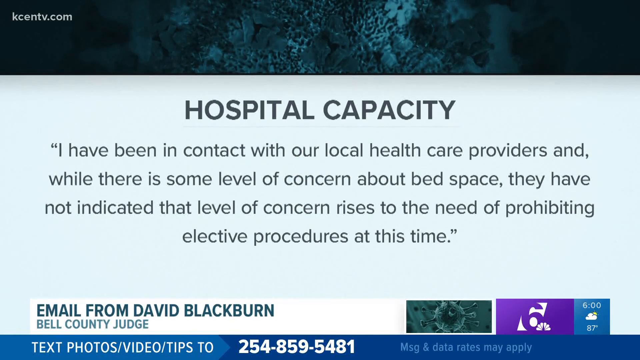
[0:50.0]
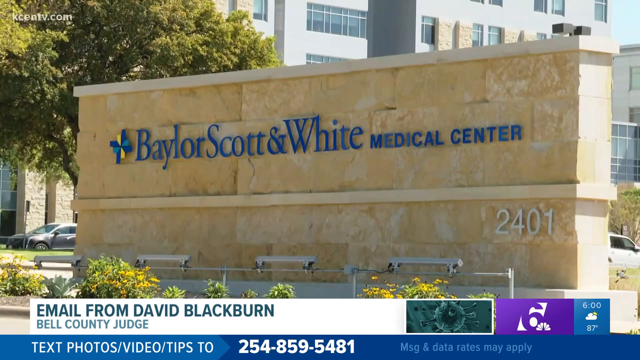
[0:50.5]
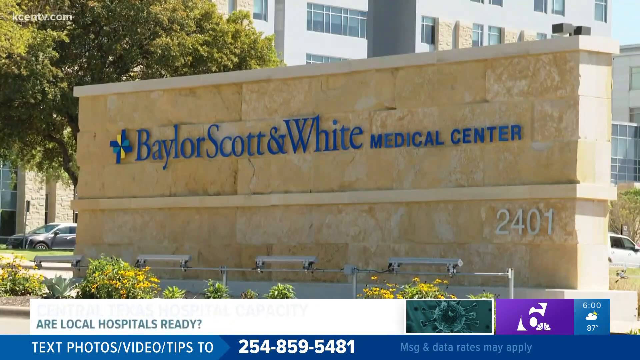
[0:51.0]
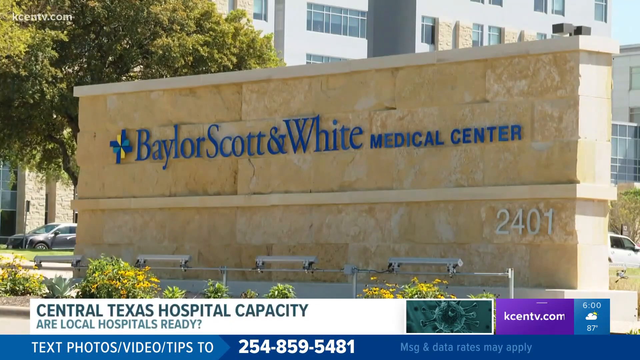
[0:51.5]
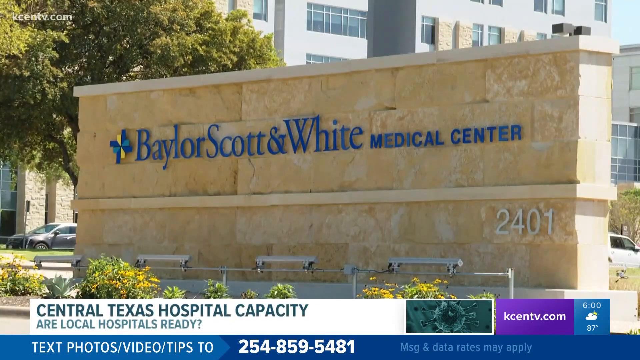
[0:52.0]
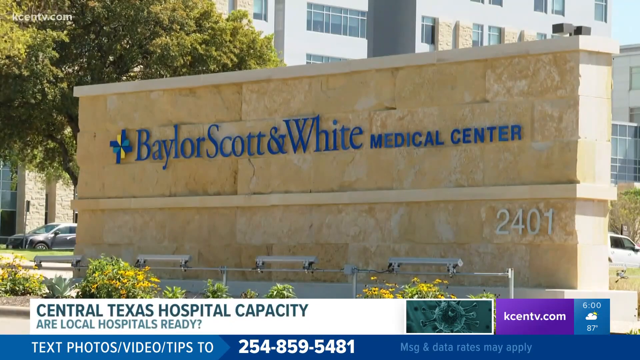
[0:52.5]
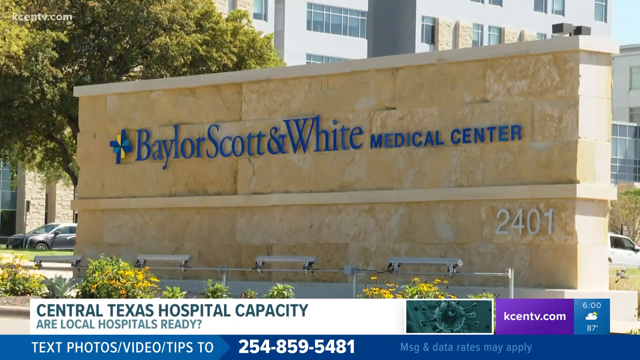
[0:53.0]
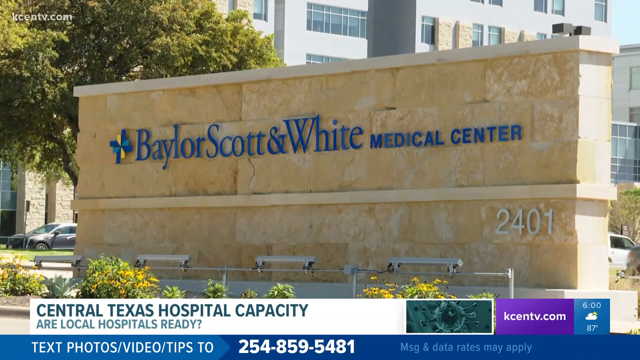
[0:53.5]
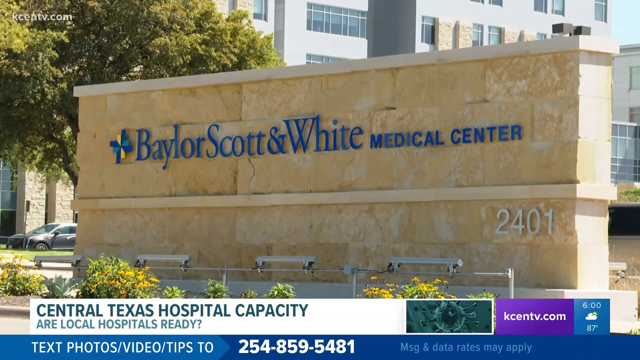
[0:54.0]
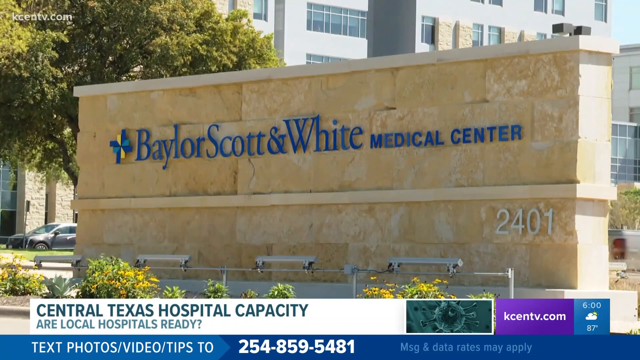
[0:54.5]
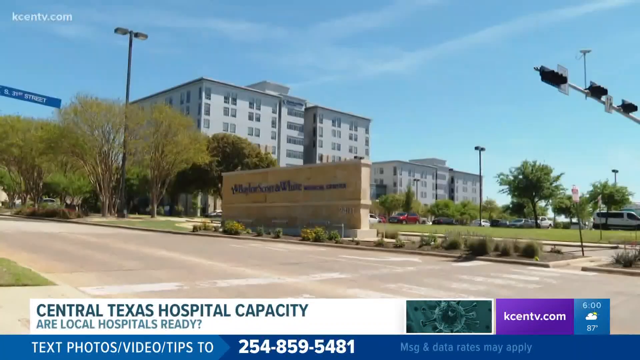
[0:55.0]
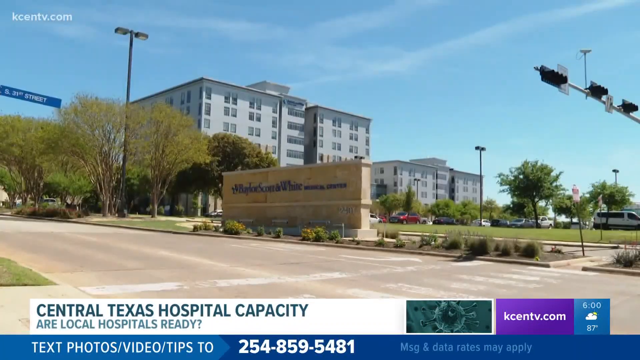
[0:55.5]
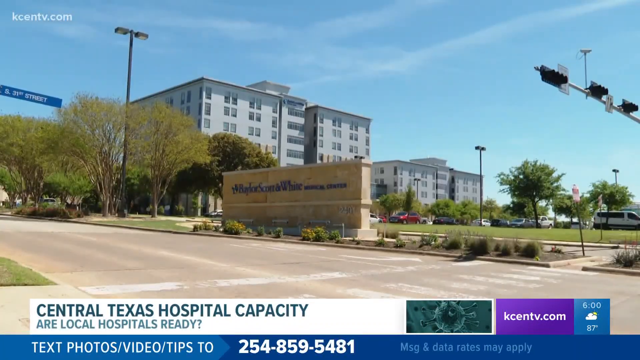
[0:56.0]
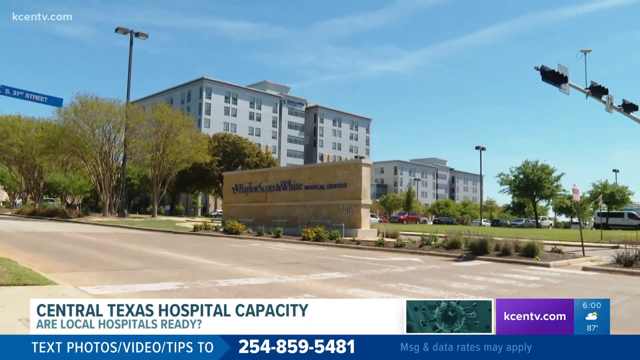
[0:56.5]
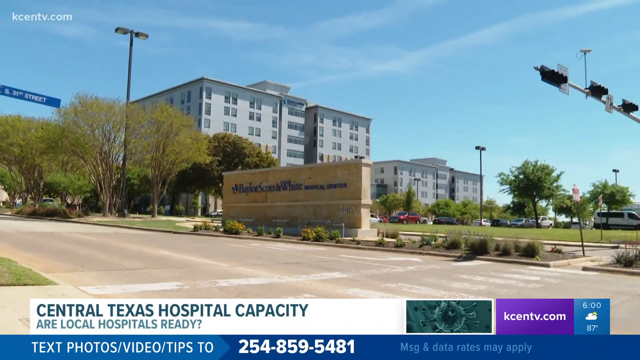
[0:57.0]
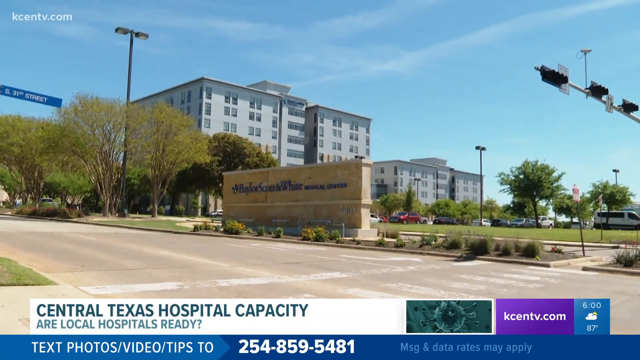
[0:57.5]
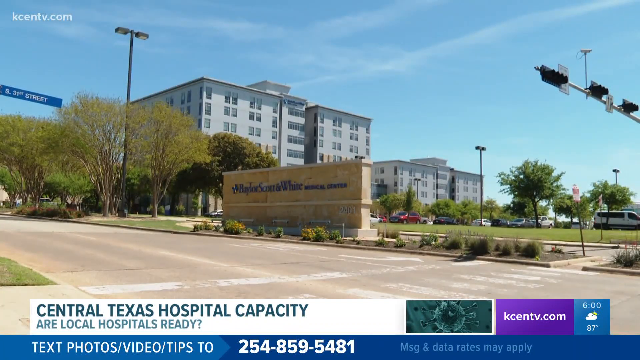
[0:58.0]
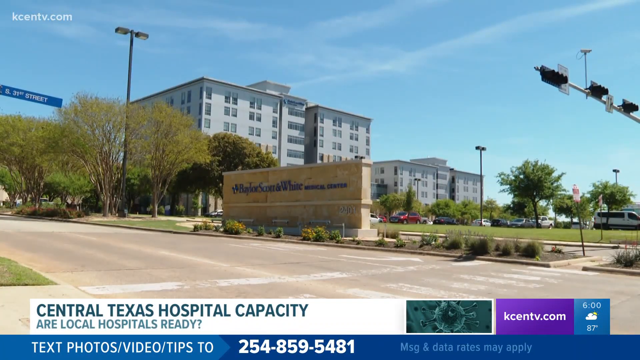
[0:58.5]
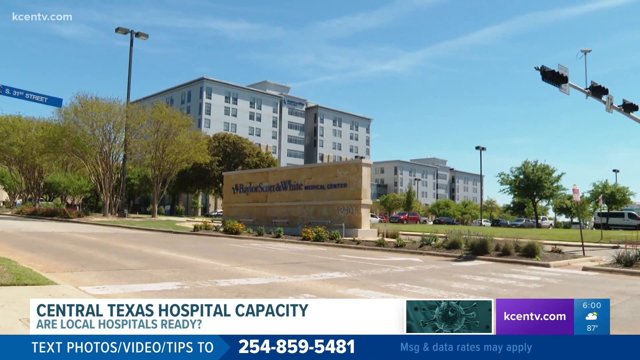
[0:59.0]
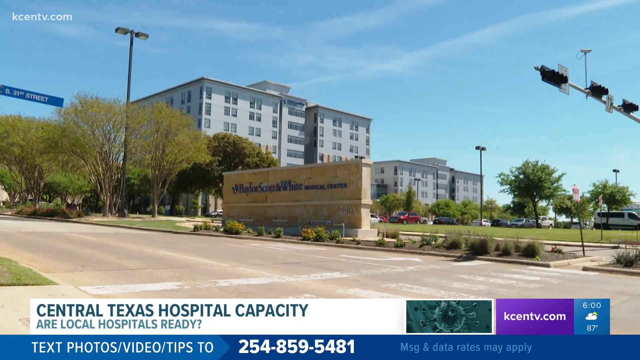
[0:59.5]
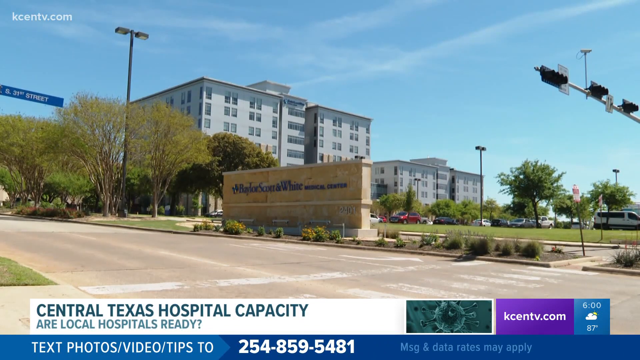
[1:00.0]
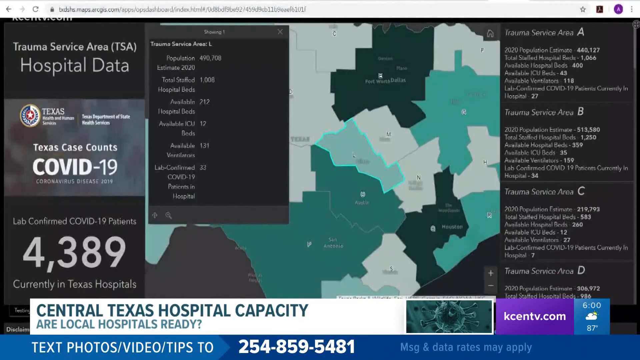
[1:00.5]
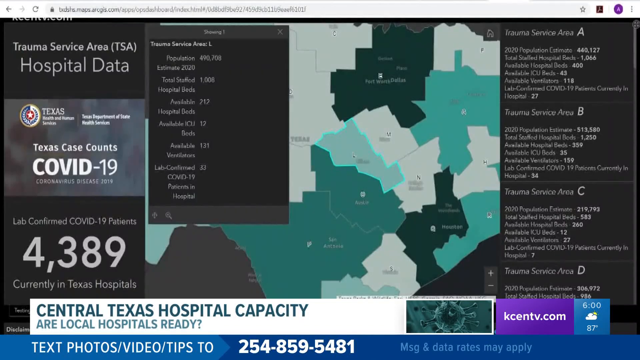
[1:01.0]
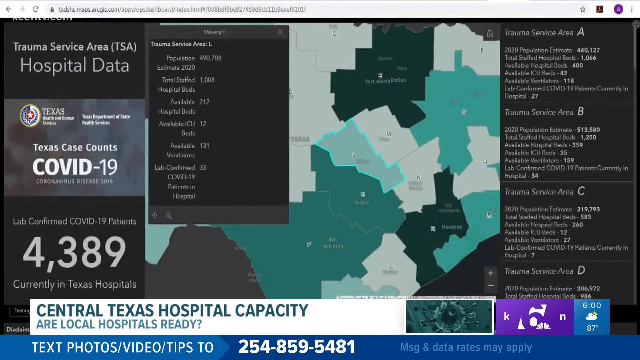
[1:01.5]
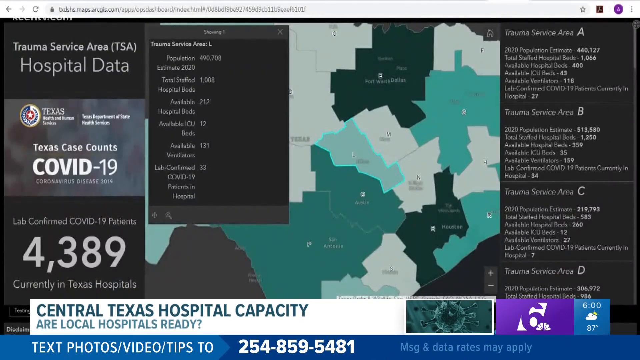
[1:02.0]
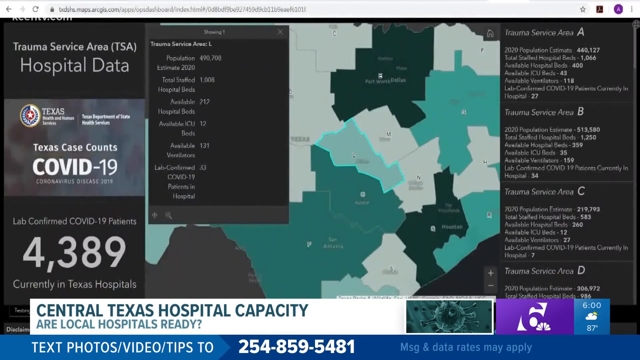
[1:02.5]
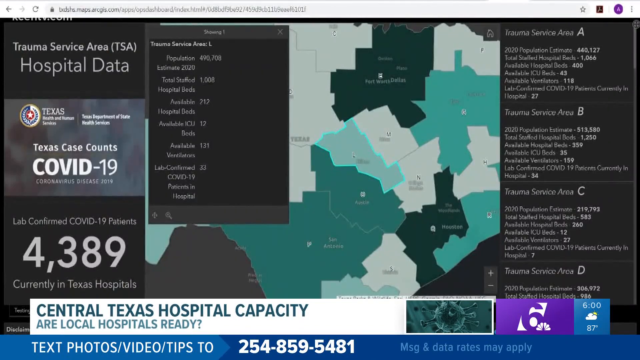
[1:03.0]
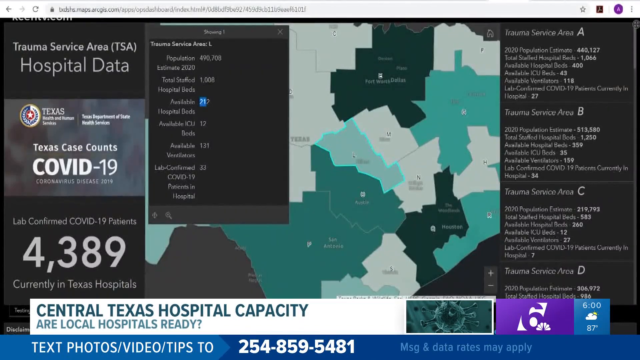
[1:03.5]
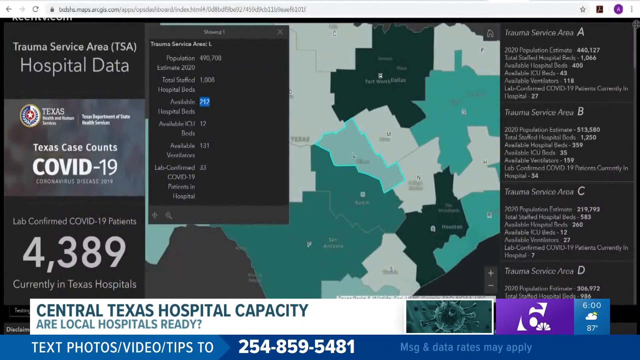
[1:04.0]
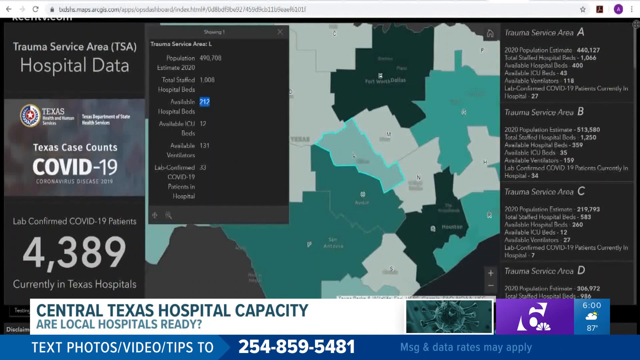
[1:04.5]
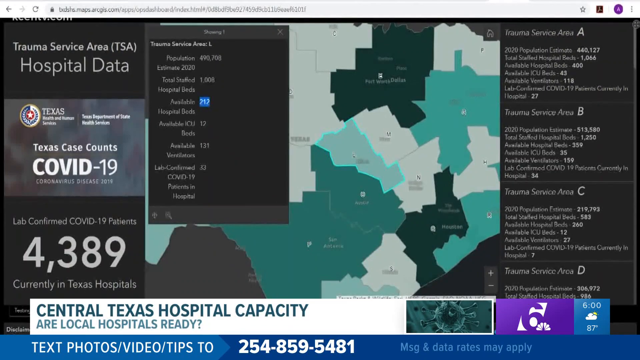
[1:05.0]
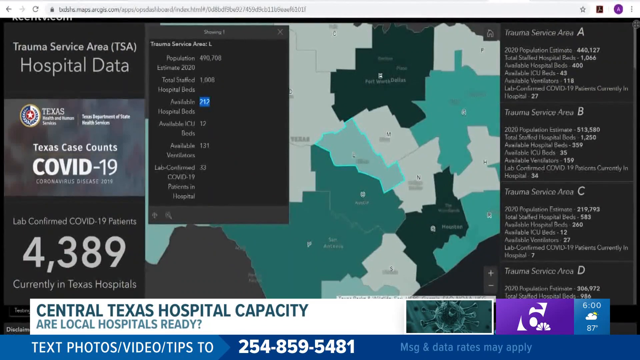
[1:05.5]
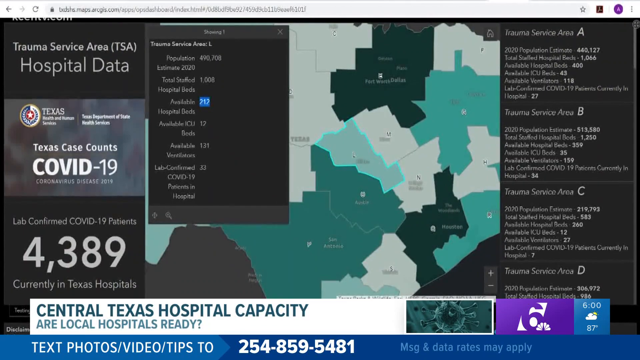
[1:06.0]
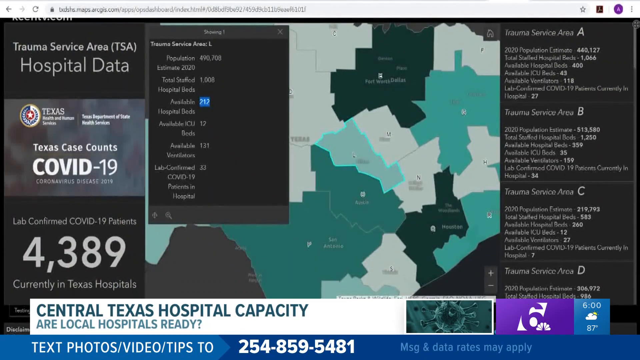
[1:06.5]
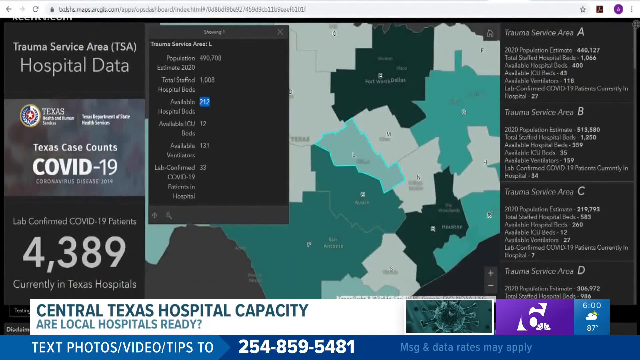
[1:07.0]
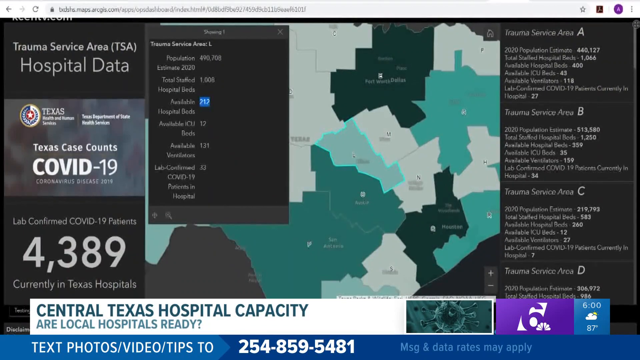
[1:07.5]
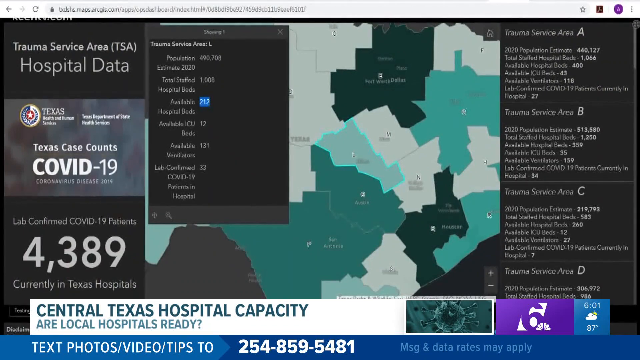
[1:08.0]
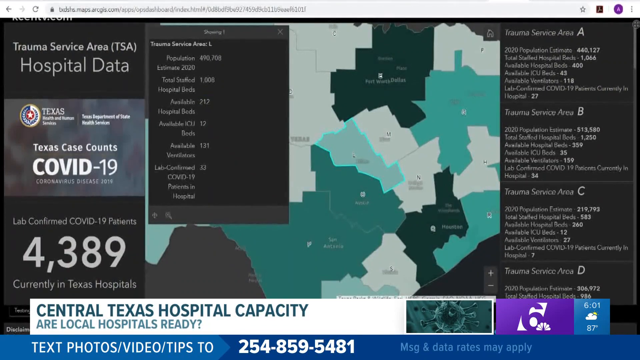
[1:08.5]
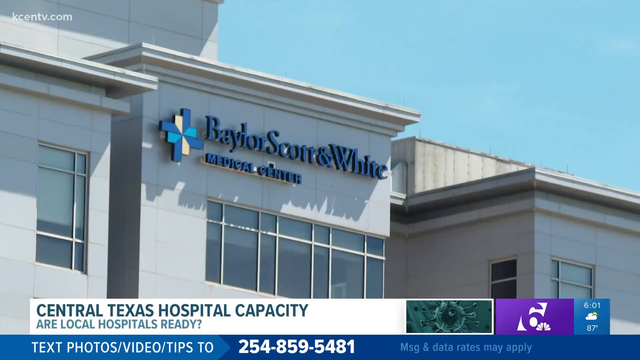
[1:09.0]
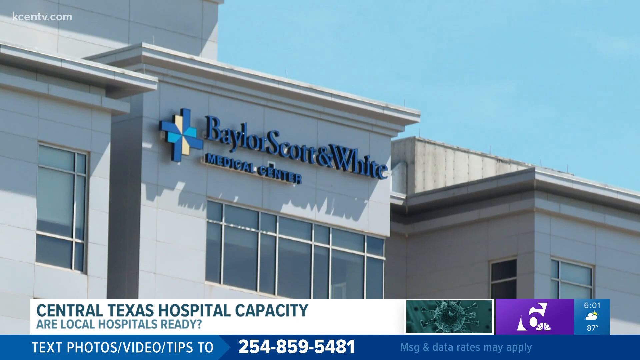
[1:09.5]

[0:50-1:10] The quote stays on screen briefly. Then the outside of a building appears, with "Baylor Scott and White Medical Center" on a large tan brick wall structure. It is seen up close for a moment, then zoomed out further, with buildings behind it that apparently belong to the medical facility. The numbers 2401 are on the structure, possibly the address. The landscape includes a tree, a well-manicured lawn and a traffic light. Next, a box of information about trauma service hospital data pops up, briefly showing a map of parts of Texas and Texas case counts for COVID-19, with over 4,300 lab-confirmed COVID-19 patients at the moment. Other statistics pop up in different boxes across the screen; the text is small and hard to make out, with many words and numbers on the left side and a column on the right side. In the middle is a map of Texas colored mostly green, with some areas darker than others in light green, sea green, forest green and a teal-like color, possibly representing regions or counties and where COVID cases are more prevalent; no color key is visible. The hospital capacity information and the phone number remain at the bottom of the screen. At the end, the video returns to a shot of the medical center.